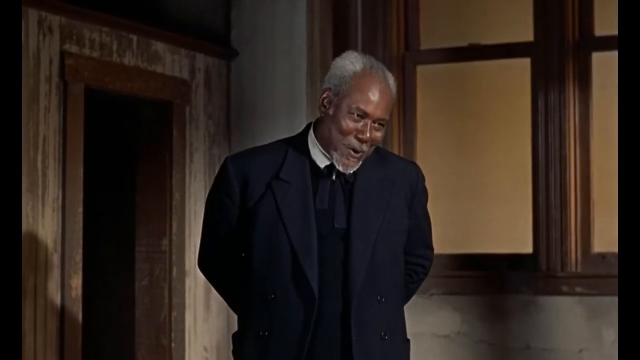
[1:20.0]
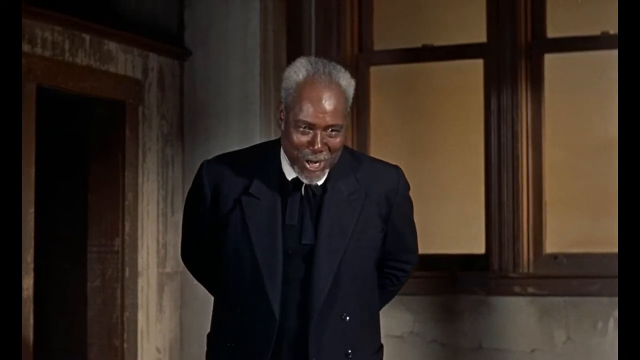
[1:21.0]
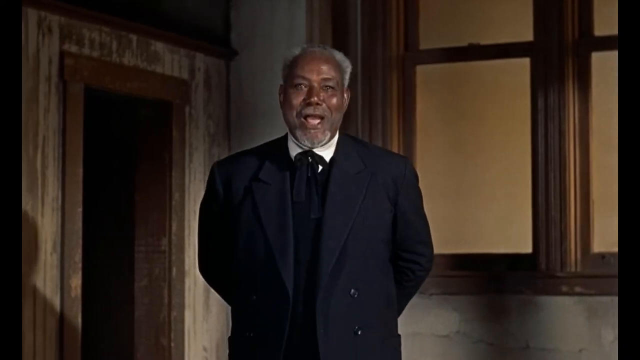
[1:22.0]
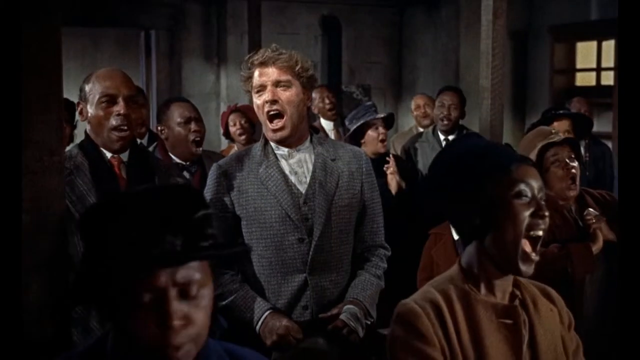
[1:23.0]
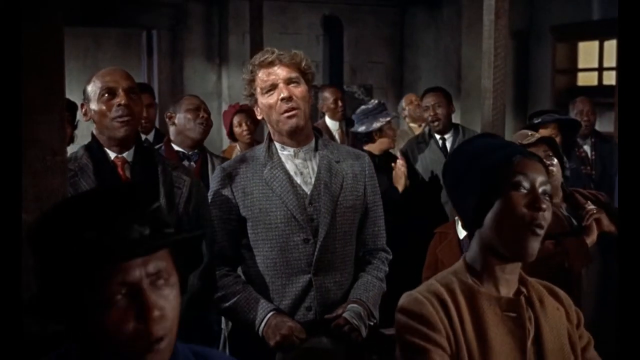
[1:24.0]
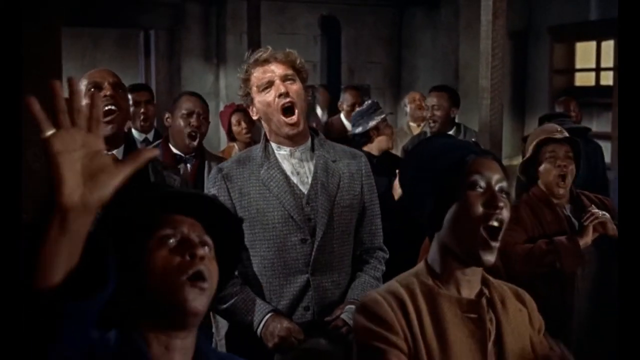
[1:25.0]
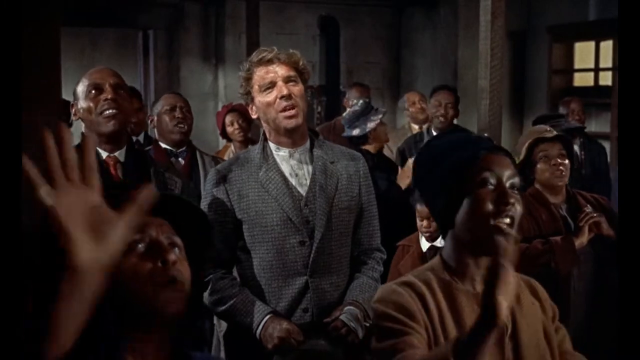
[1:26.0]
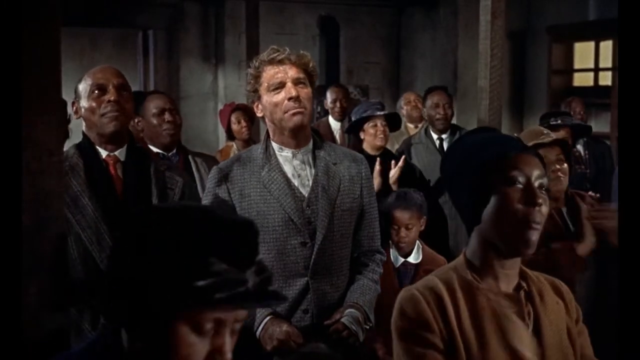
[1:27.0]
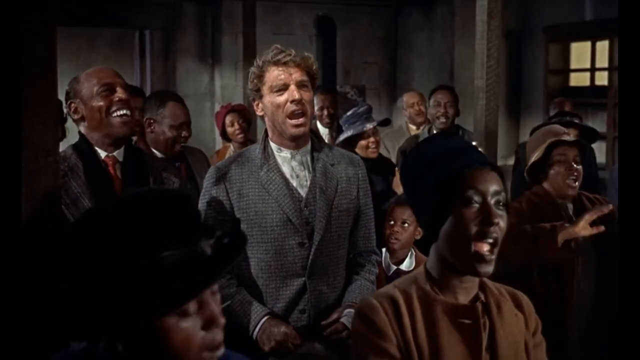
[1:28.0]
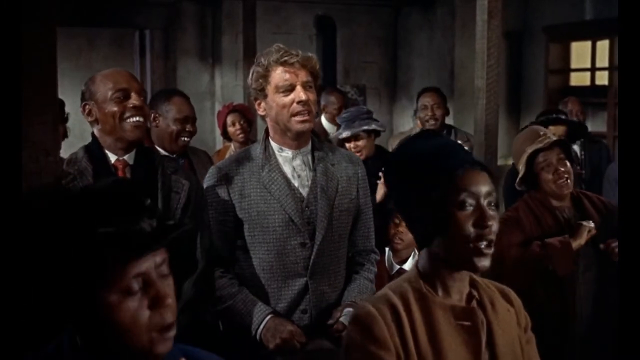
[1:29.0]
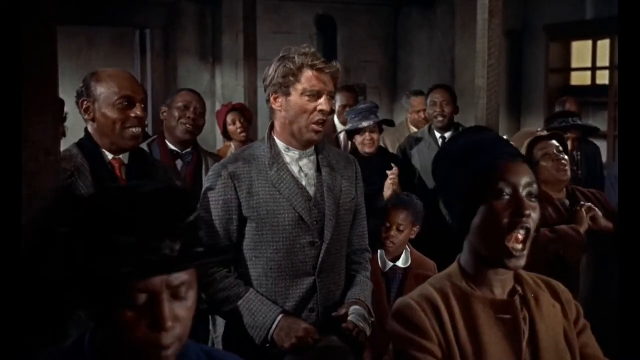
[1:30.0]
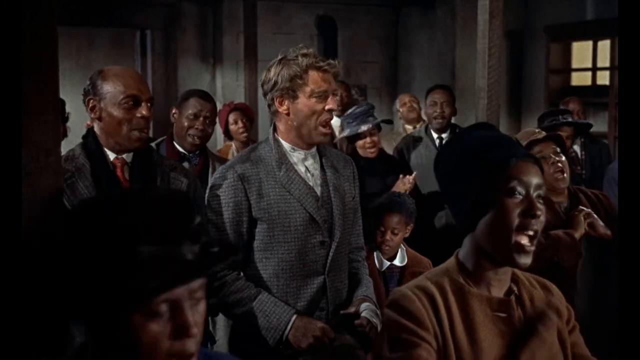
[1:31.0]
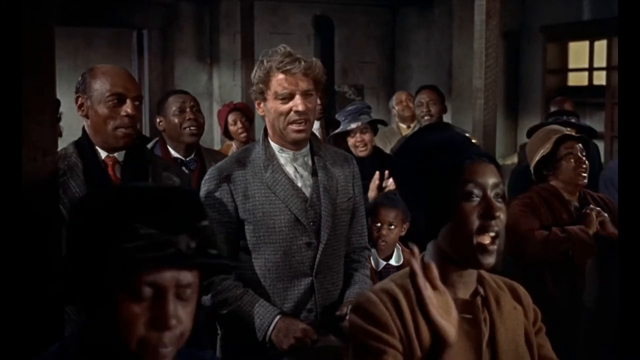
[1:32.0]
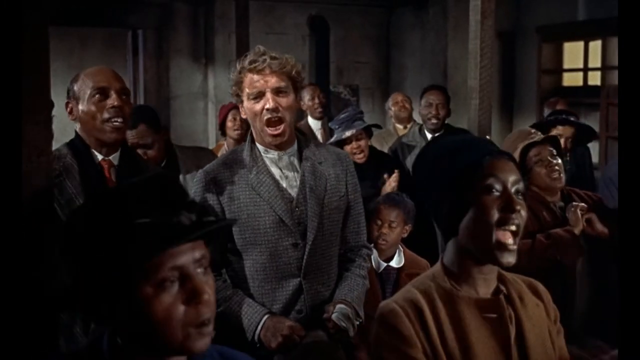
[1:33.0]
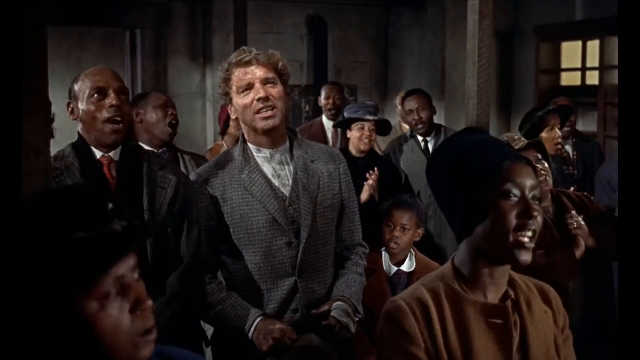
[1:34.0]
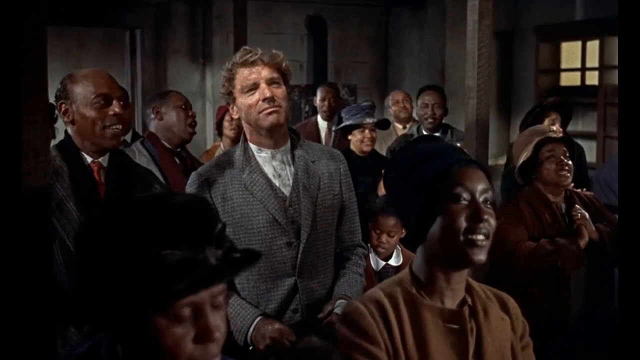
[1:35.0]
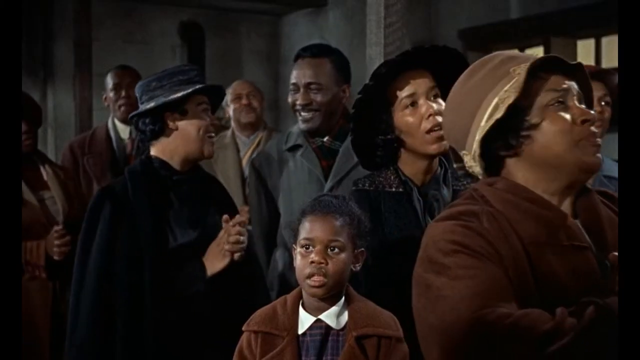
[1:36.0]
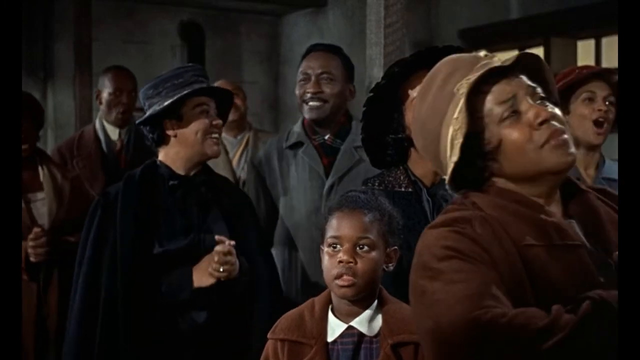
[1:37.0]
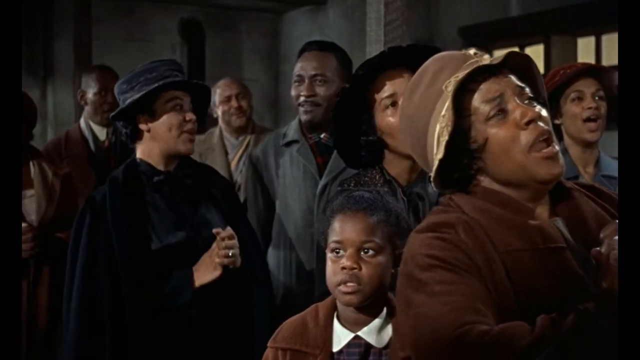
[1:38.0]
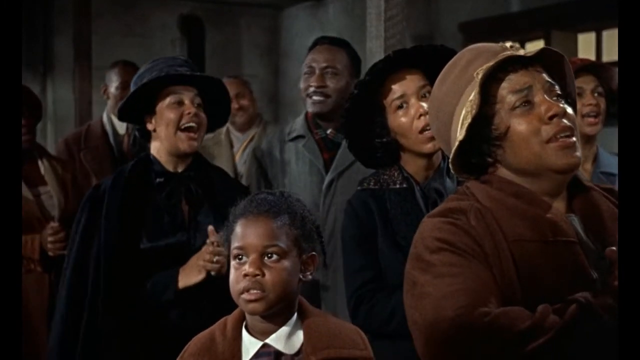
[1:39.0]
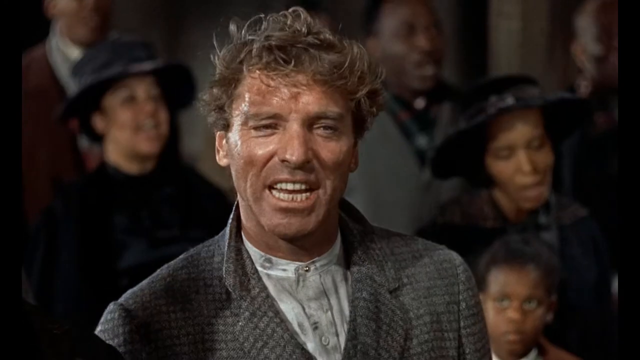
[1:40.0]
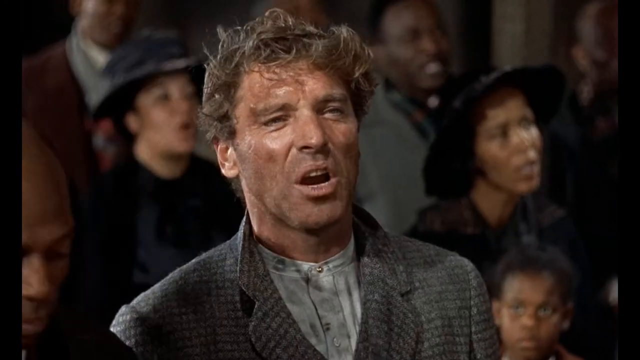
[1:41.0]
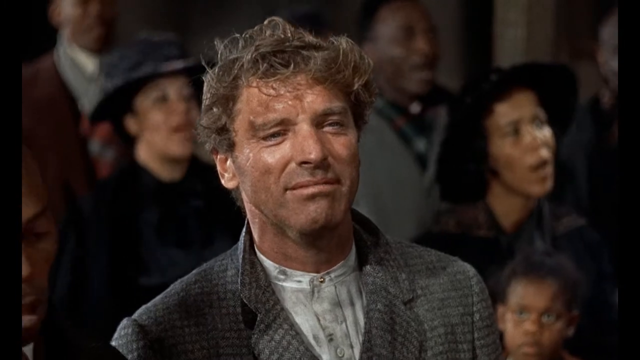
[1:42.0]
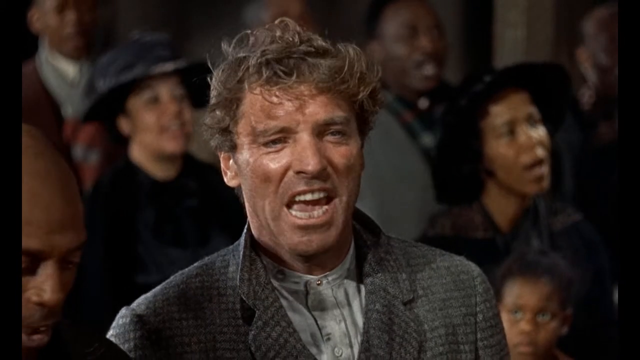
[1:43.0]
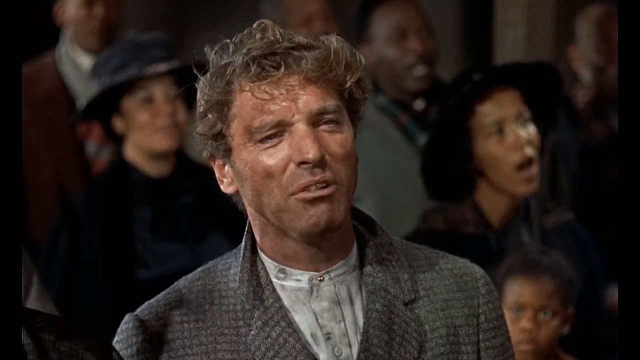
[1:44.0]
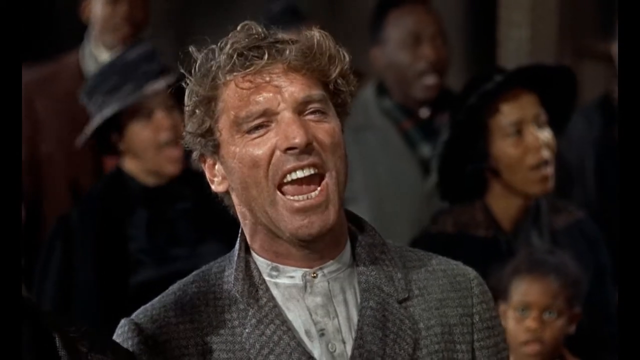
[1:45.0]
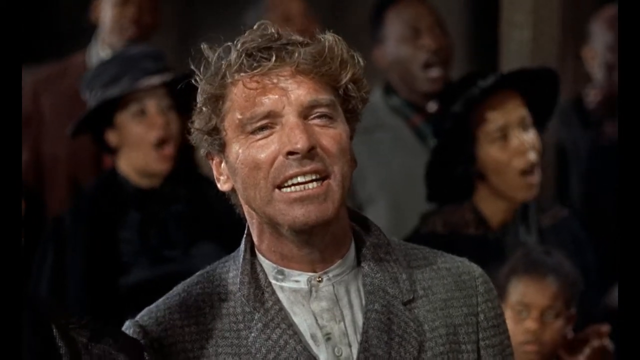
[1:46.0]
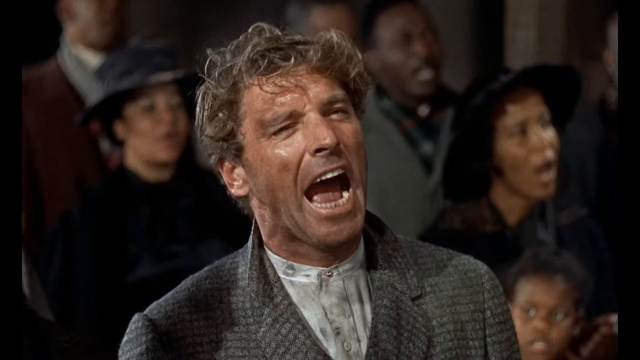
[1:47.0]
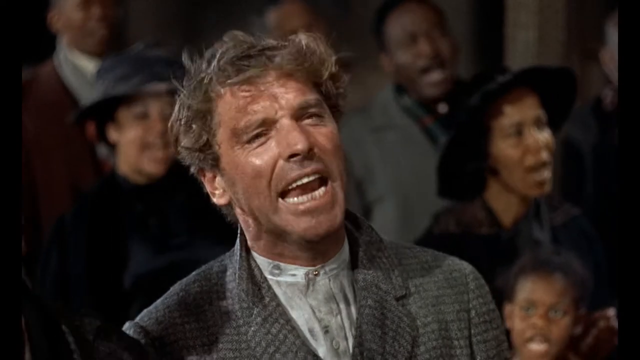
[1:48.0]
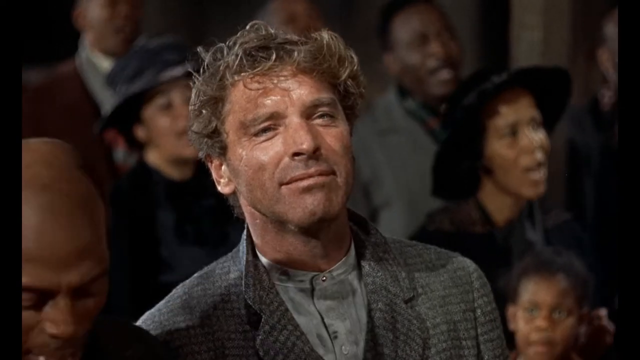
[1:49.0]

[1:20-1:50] As everybody sings along with him, so does the man on the stage, who gets excited and seems to sing even louder with the rest of the crowd. The man who came in seems to be singing louder, apparently trying to blend in with the group. A couple behind him look at each other, smiling. A little boy looks up at the man in awe and confusion. The camera pans to only the man's face, with everyone in the background blurred. He has strong expressions that seem to be of desperation; he seems strong but also seems to be wanting something. He continues to sing very strongly with everybody else.